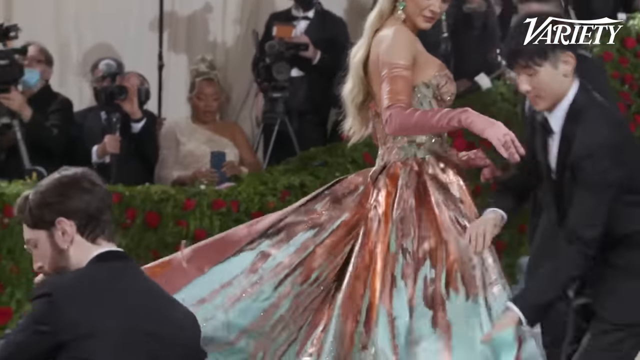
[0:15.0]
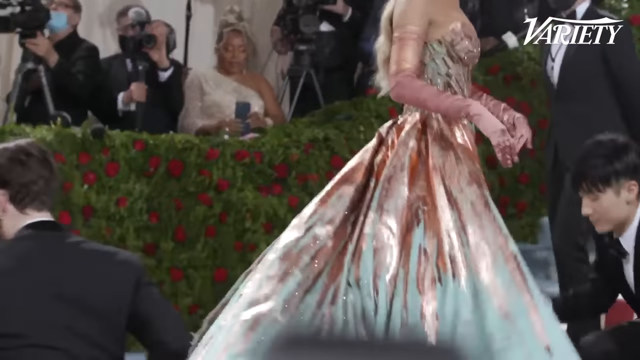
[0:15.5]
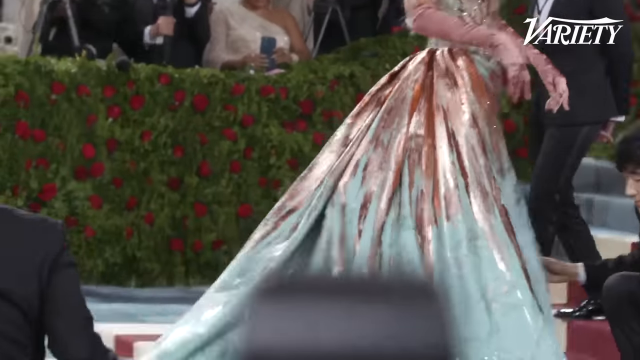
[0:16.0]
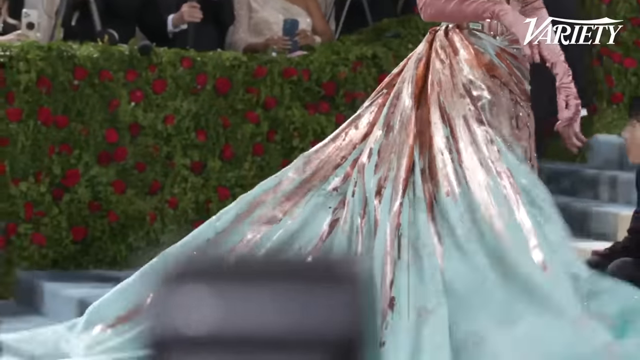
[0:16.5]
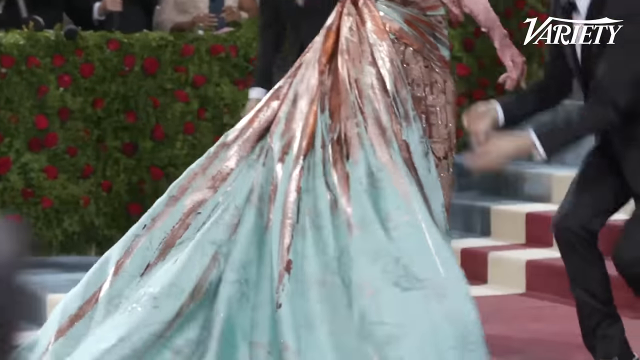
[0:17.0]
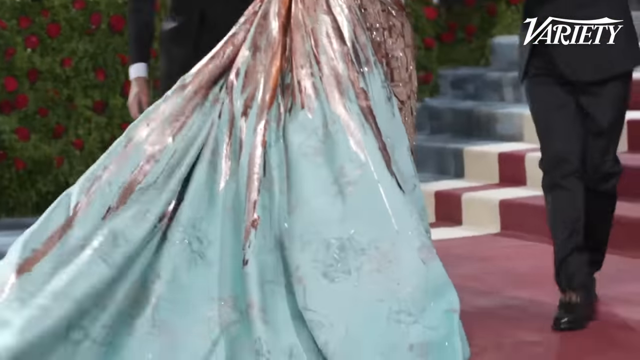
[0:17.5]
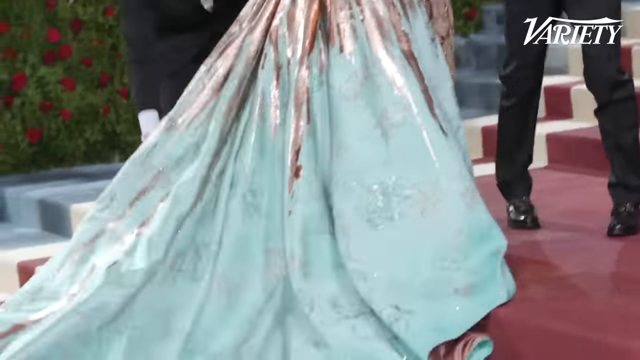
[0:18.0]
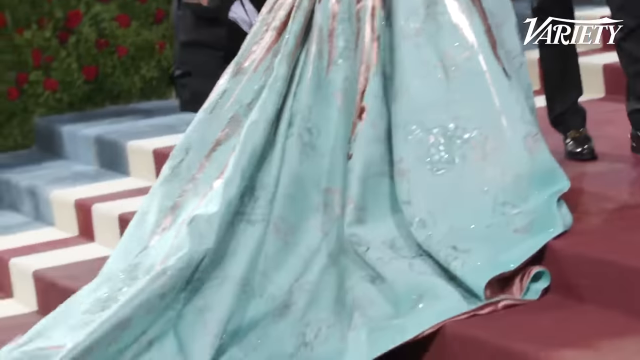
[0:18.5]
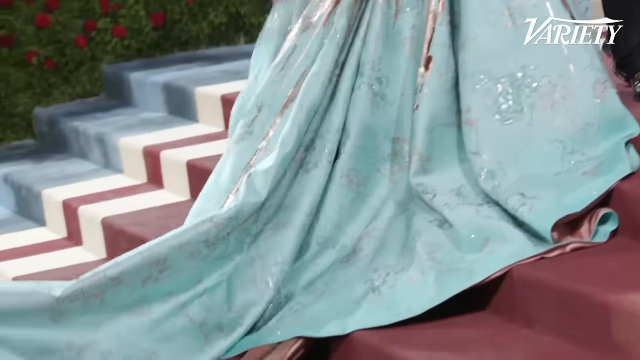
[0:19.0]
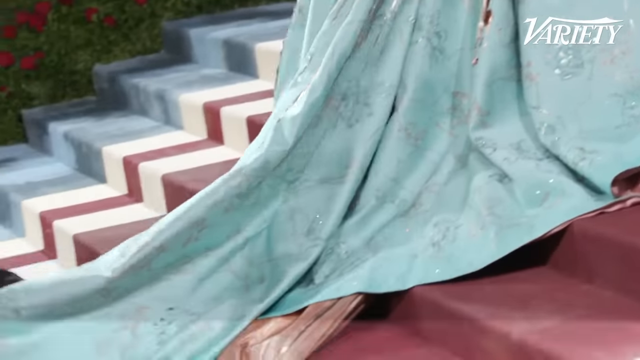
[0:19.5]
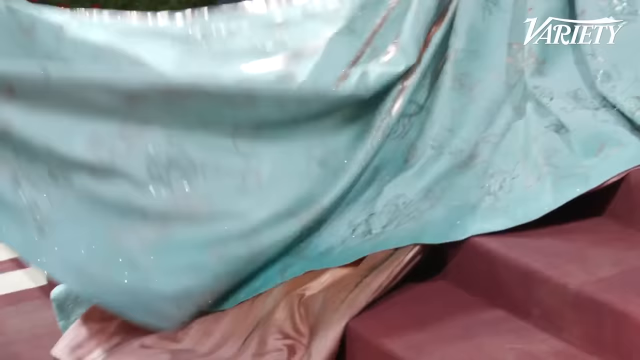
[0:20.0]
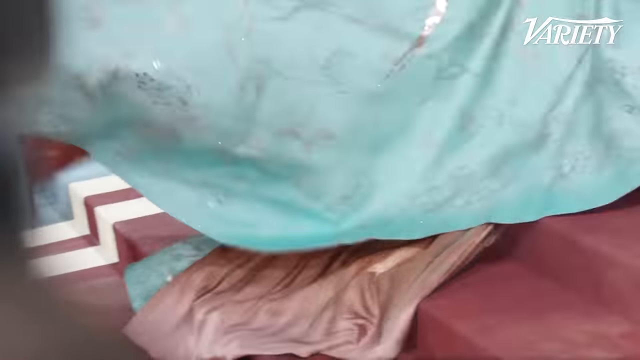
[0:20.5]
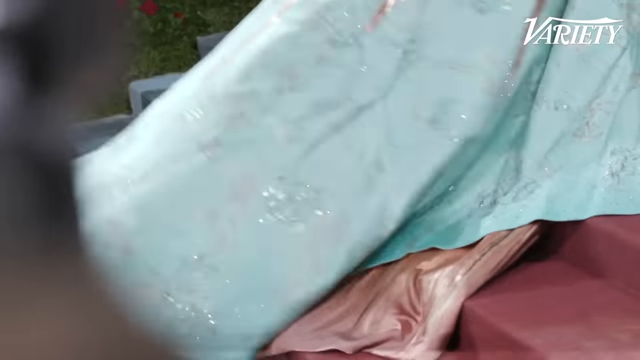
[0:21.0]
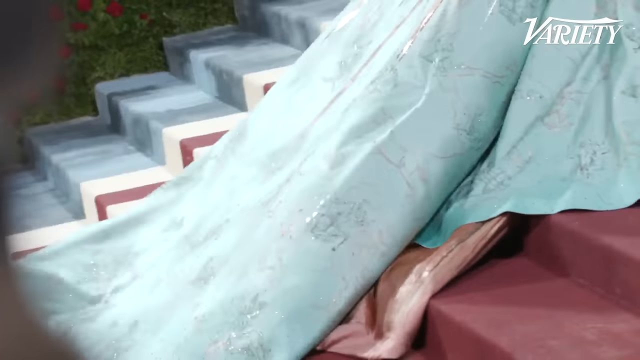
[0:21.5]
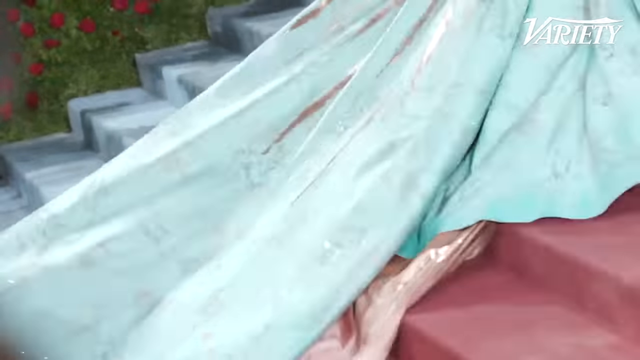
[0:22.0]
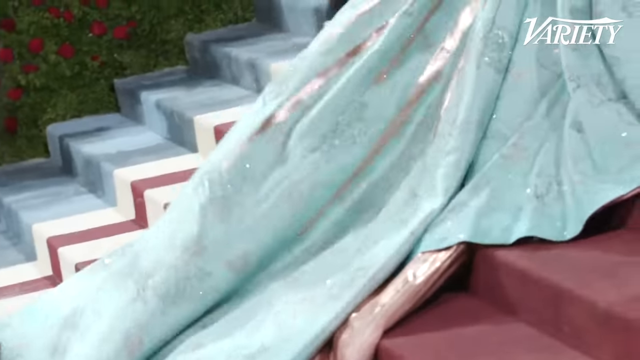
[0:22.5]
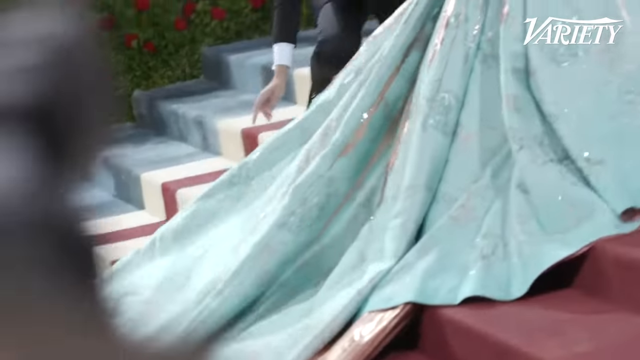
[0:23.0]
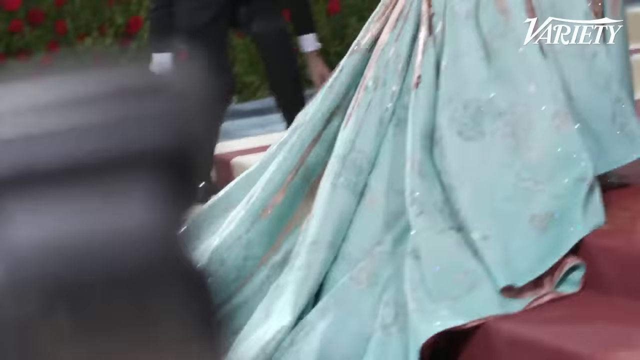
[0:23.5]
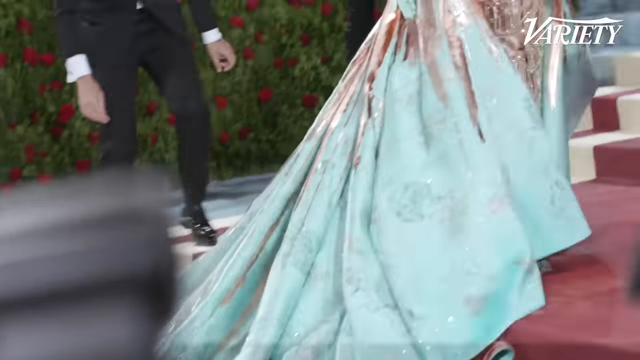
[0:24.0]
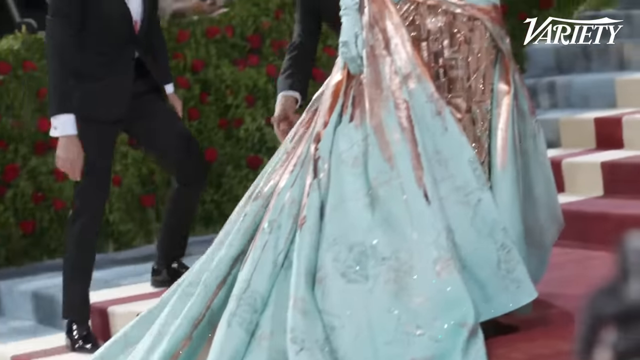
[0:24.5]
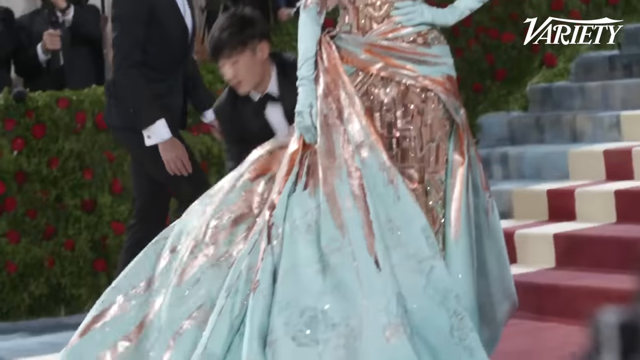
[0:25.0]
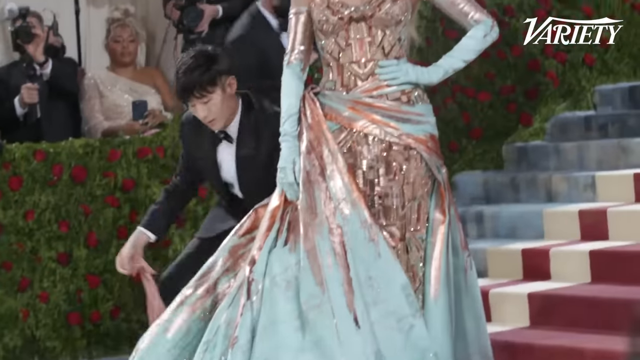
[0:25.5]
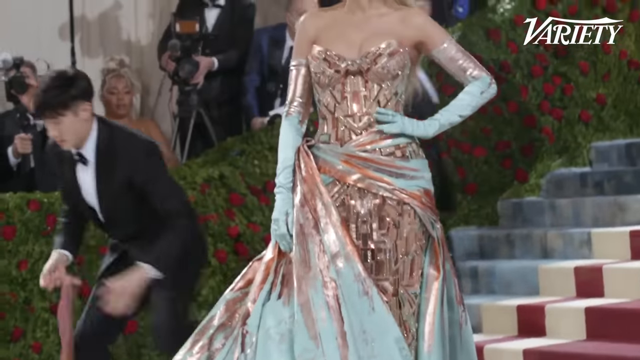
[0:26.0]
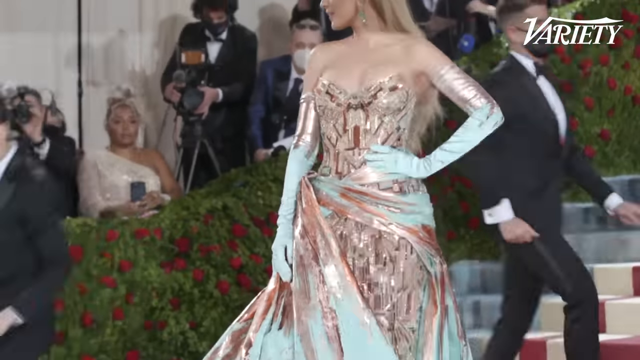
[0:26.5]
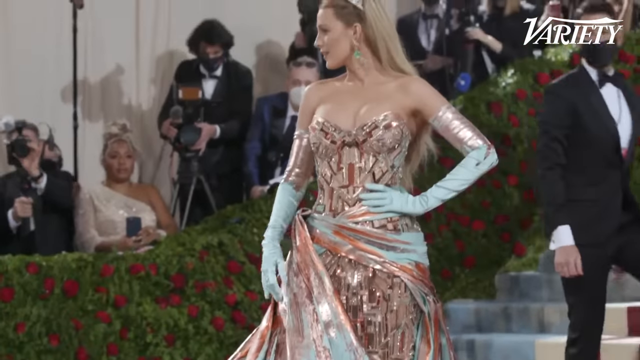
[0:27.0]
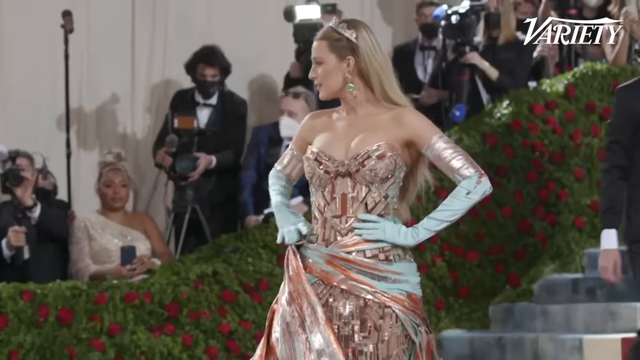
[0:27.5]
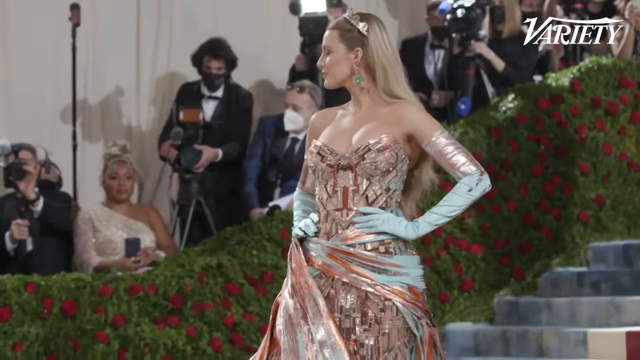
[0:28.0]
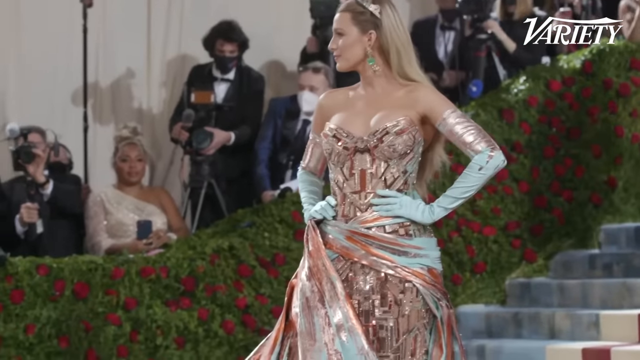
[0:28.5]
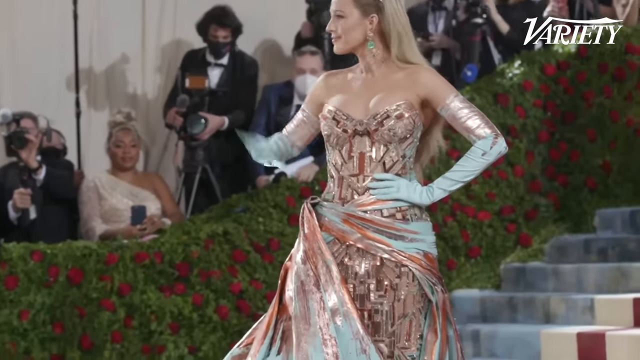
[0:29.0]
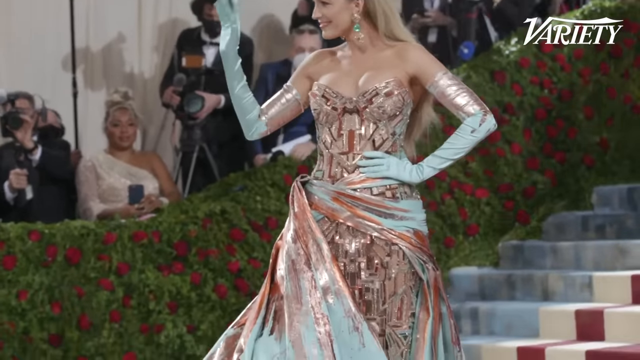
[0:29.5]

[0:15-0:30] The camera is zoomed on the bottom of Blake Lively's dress, which has been unfurled by her male helpers at the bottom of the stairs outside the Met Gala. The skirt is very long and her feet cannot be seen. A train extends out, and the shot focuses on the skirt and train: metallic pink on top, which kind of shoots down in different spikes onto a light blue, turquoise bottom, with different embroidered patterns on the bottom of the skirt. The train runs very long down a number of steps, apparently at least five or six, as she stands on a platform with steps down below. Her gloves are pink at the top and light turquoise at the bottom. She has a corset top, very tight against her skin, with a very detailed, metallic-looking design, and very long earrings with a round green gemstone in the middle. At the end she has her left hand on her hip and her right hand raised, waving, potentially at people in the crowd.